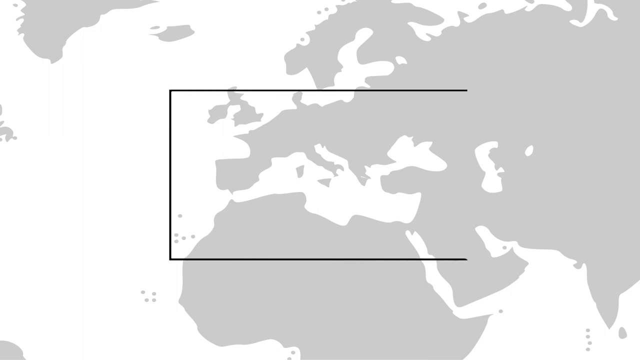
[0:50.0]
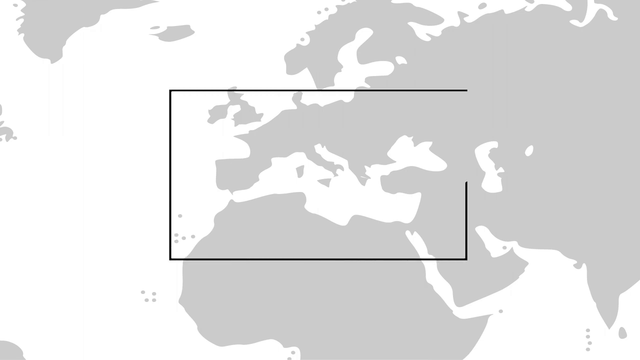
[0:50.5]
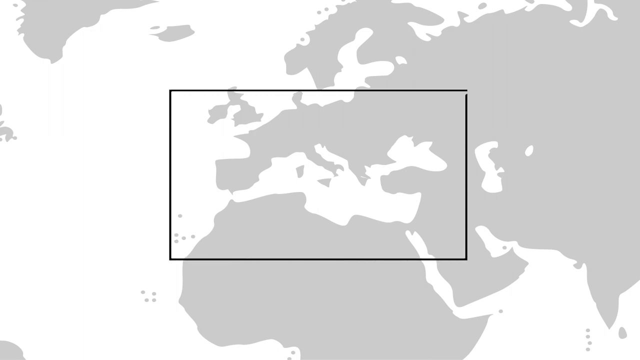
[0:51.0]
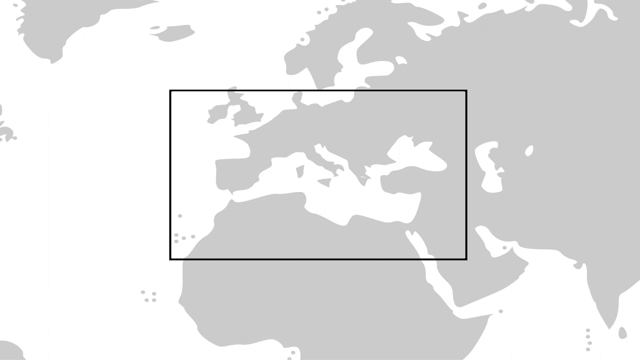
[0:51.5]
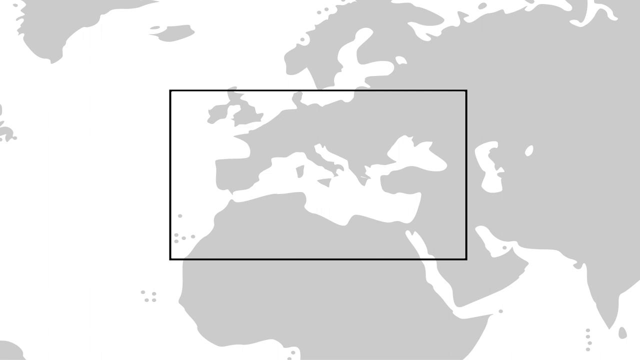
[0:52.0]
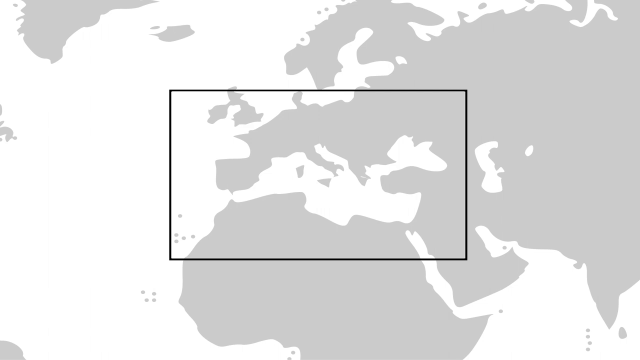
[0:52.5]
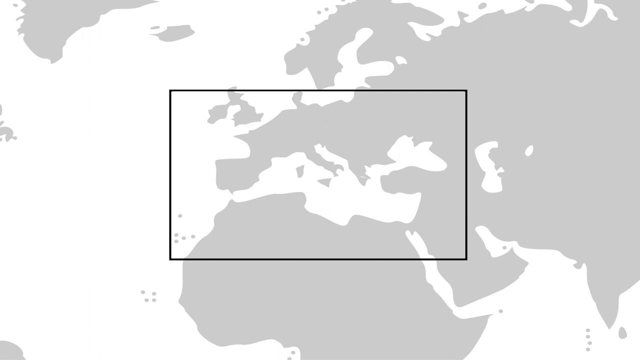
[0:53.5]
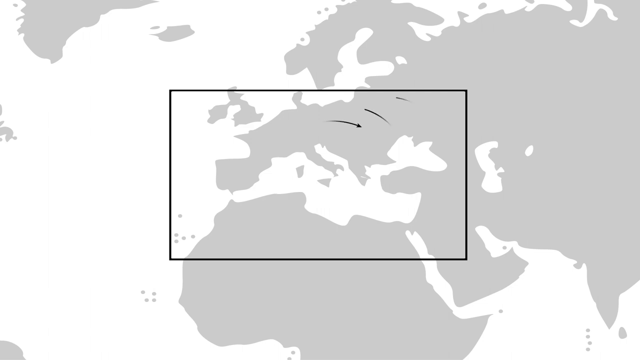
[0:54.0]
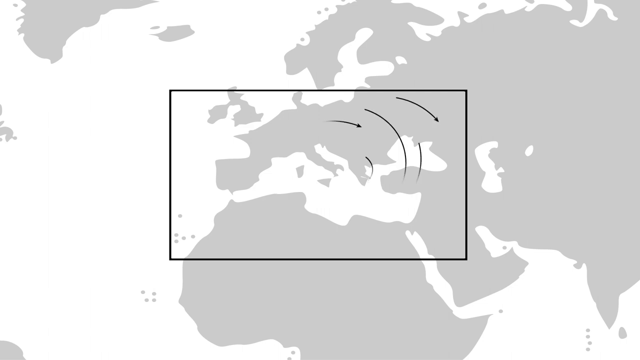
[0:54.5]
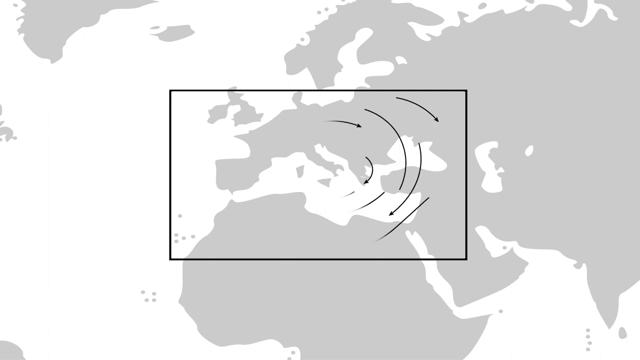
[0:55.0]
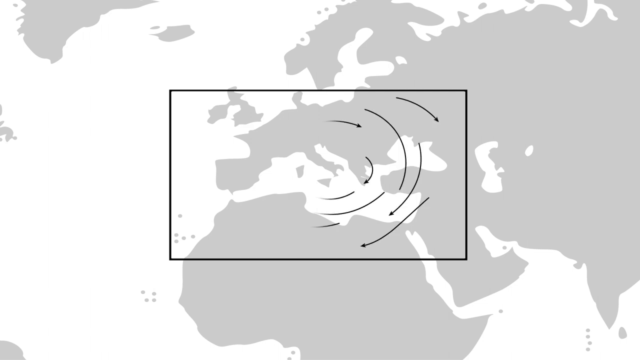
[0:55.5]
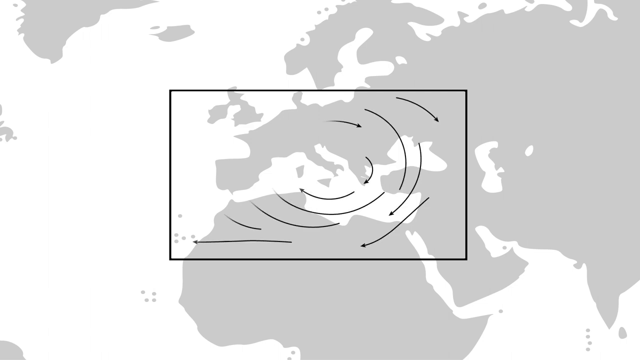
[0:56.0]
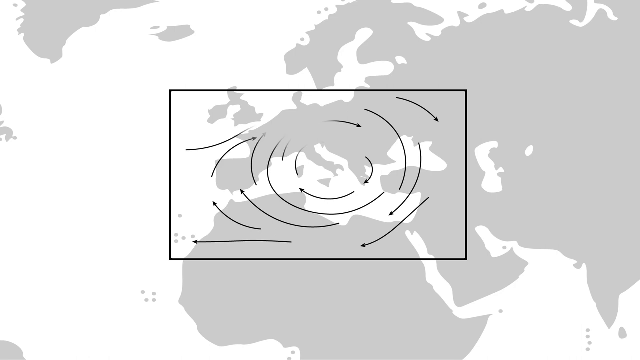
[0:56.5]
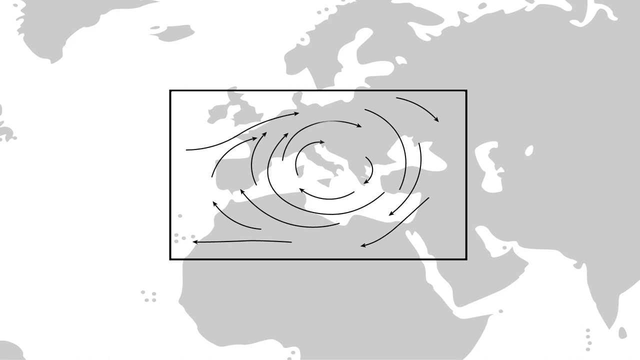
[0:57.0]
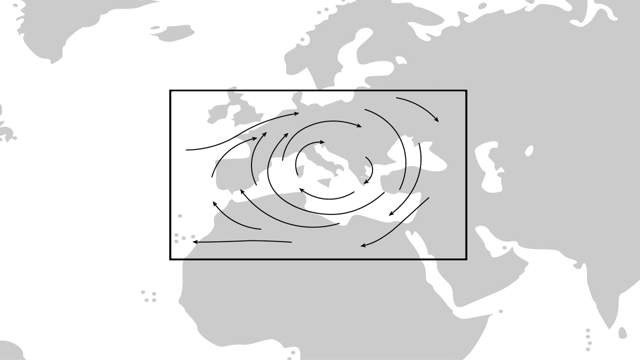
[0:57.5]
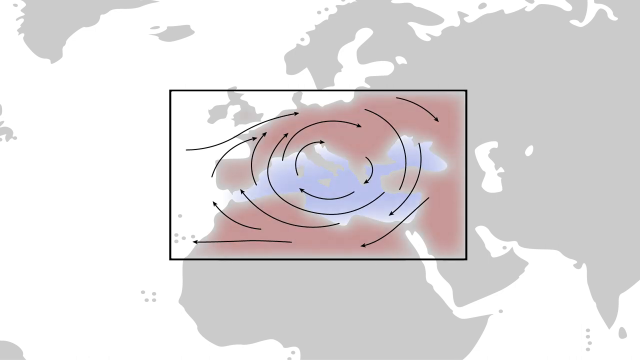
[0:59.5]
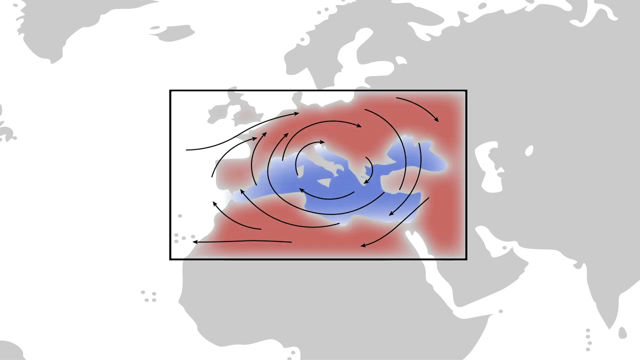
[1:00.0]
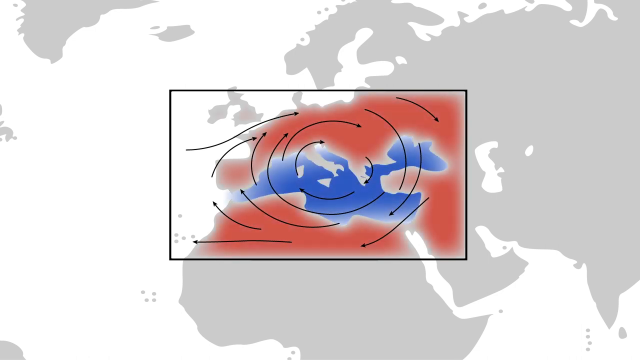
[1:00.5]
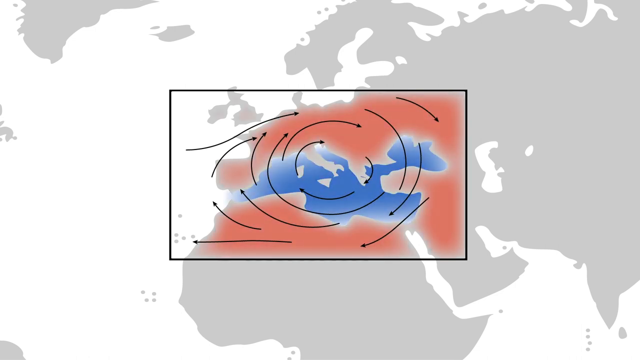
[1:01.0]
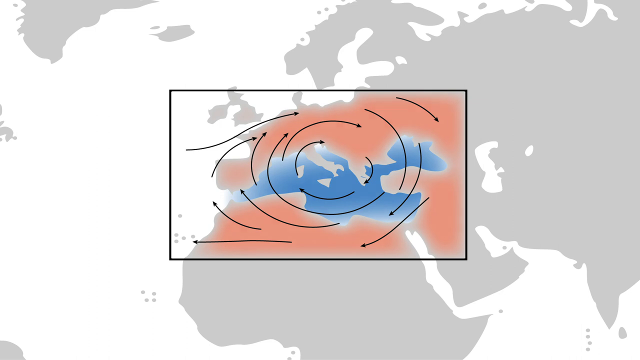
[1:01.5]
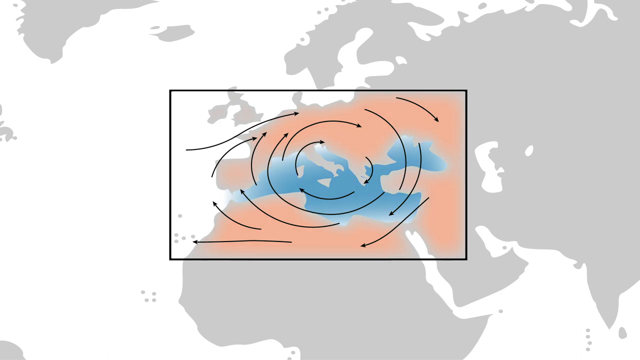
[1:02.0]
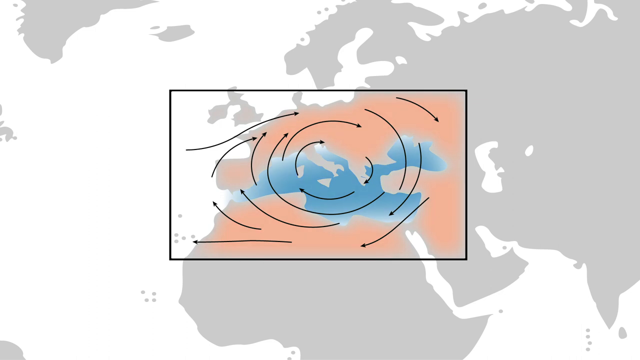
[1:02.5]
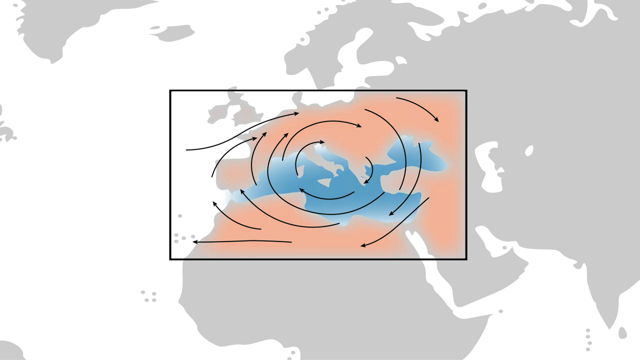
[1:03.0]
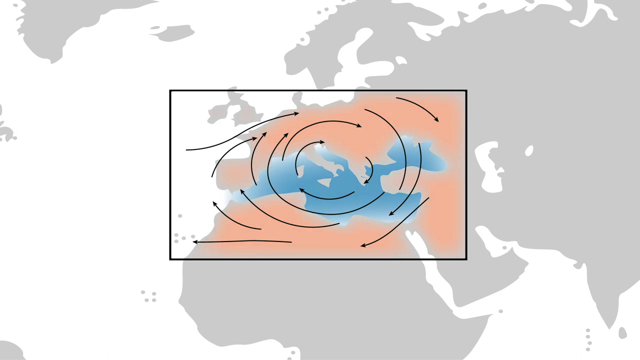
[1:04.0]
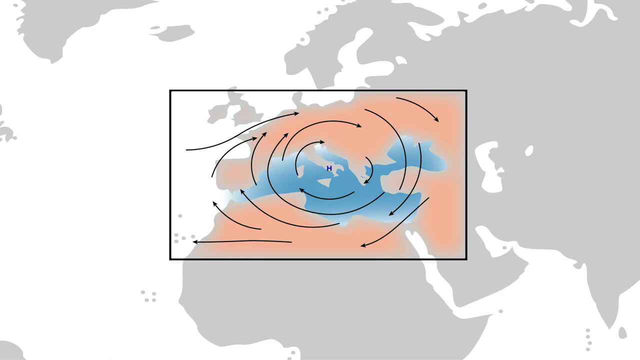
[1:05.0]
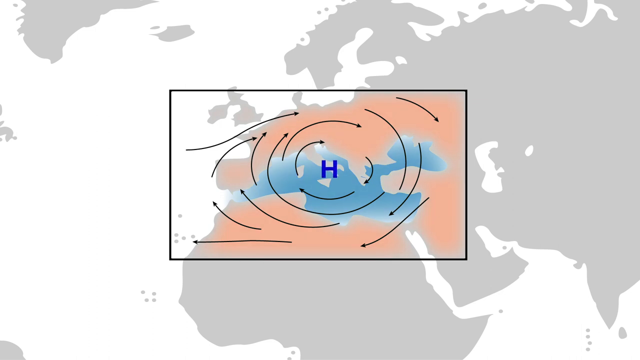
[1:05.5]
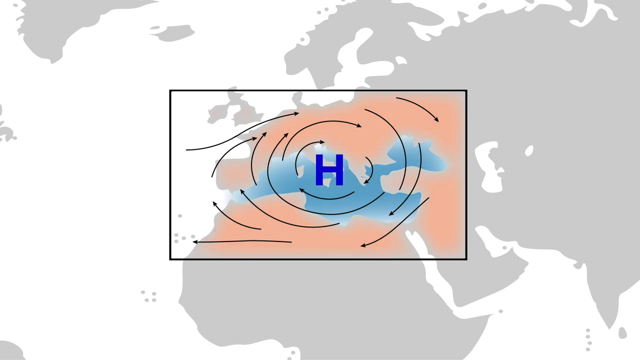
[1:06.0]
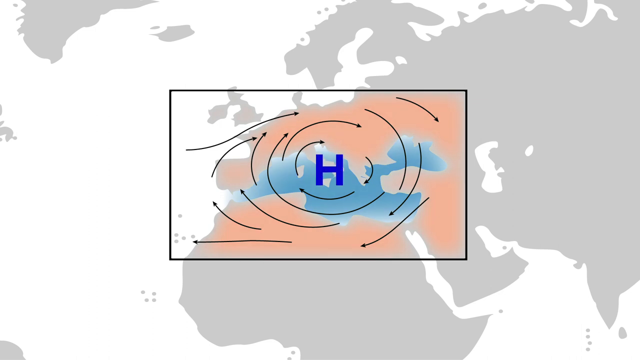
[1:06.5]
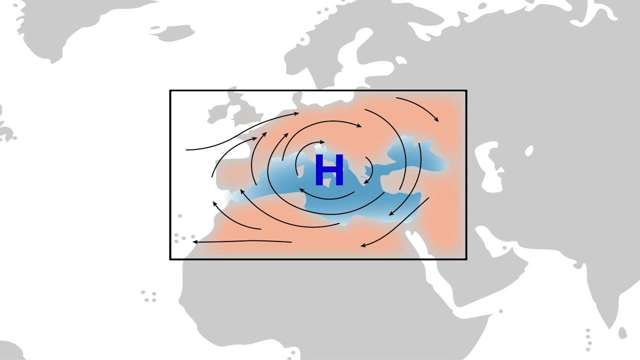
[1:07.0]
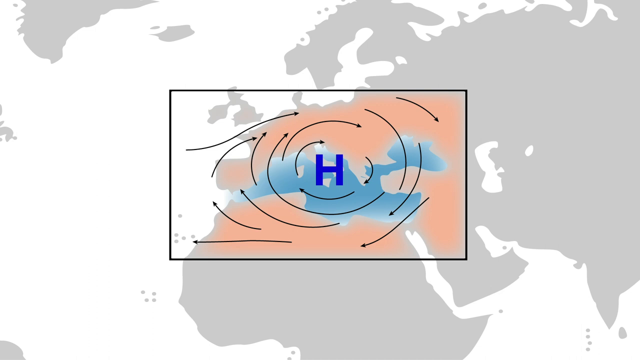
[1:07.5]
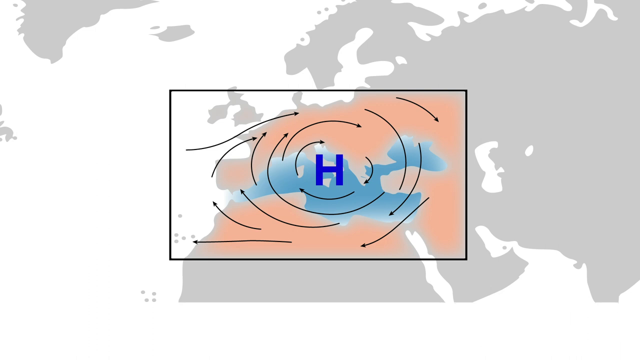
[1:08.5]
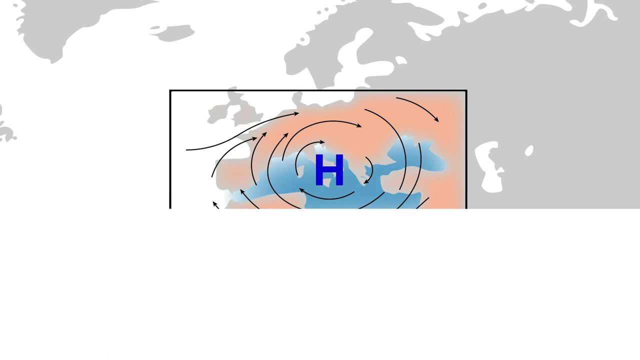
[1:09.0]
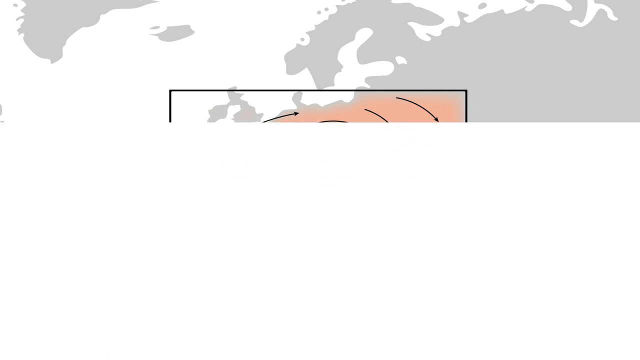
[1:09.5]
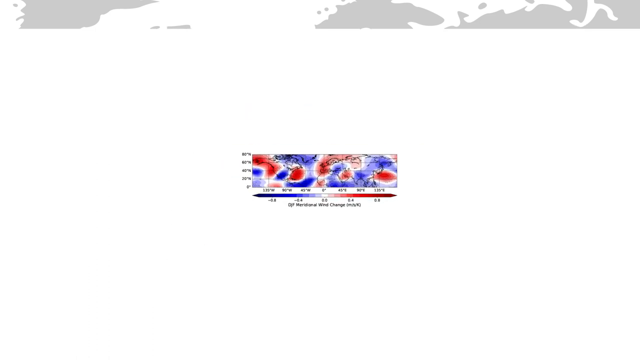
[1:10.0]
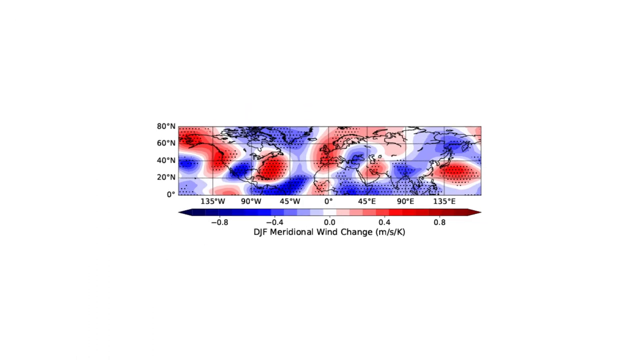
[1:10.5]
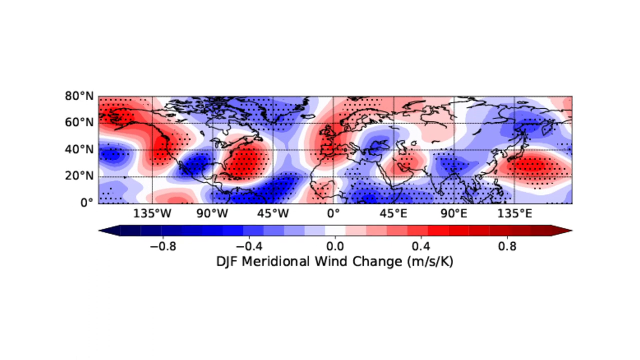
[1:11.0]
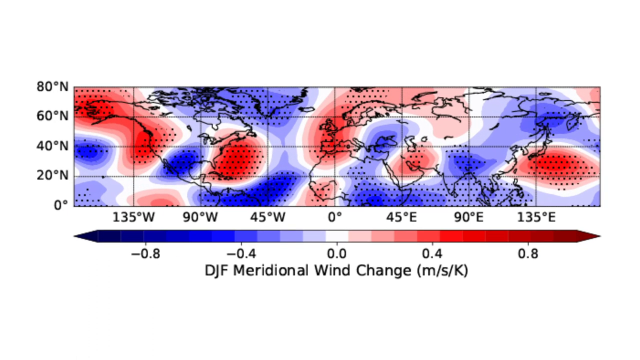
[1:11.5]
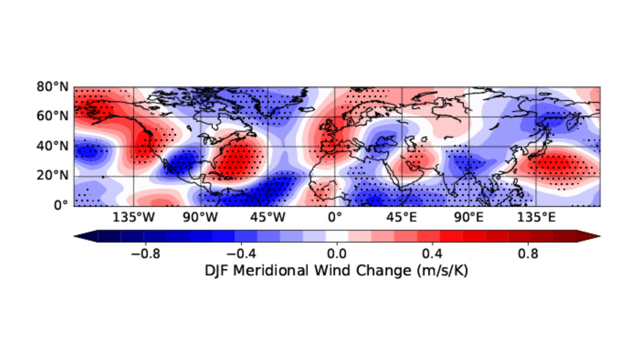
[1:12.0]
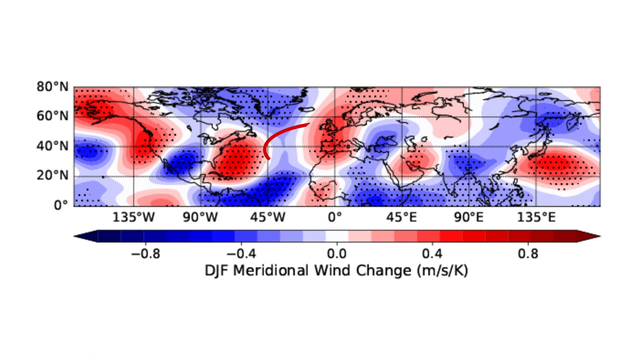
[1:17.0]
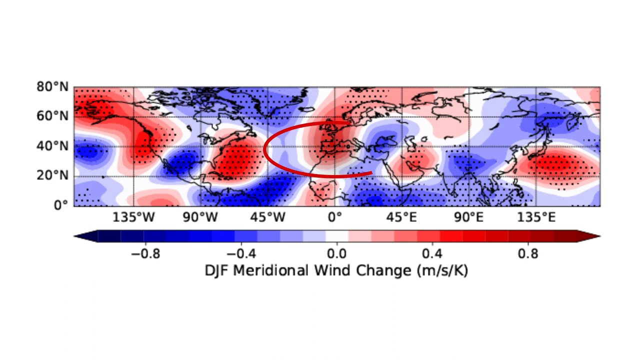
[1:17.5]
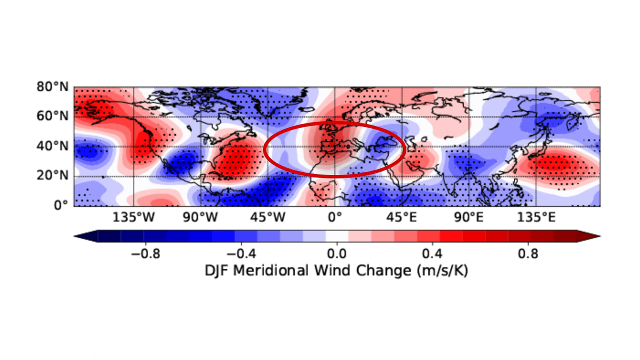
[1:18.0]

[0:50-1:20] A black rectangular outline goes around what looks like the Mediterranean area, and arrows move in a circular motion. The land areas around the Mediterranean turn red, and a blue H, a high-pressure system, appears in the middle. Next comes a blue and red map of the Mediterranean Sea area with a horizontal graph at the bottom, blue on the left and red on the right. Underneath the map is the title "DJF Meridional Wind Change." Red and blue sections across the map indicate the differentials in wind changes throughout the Mediterranean Sea area, and numbers on the left and bottom sides of the graph indicate changes in wind direction. A red oval outline is then drawn in the center of the map.